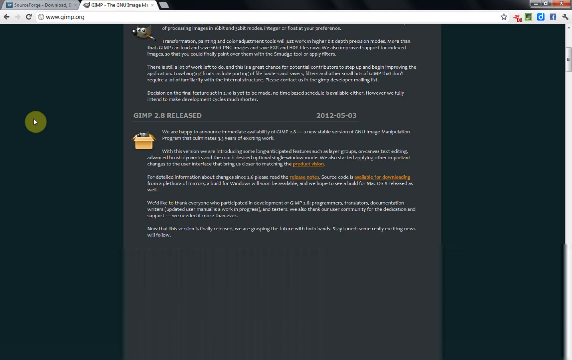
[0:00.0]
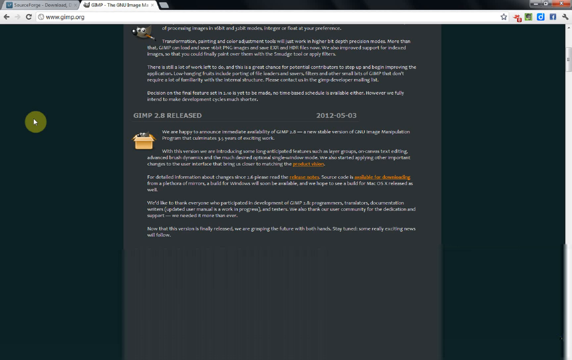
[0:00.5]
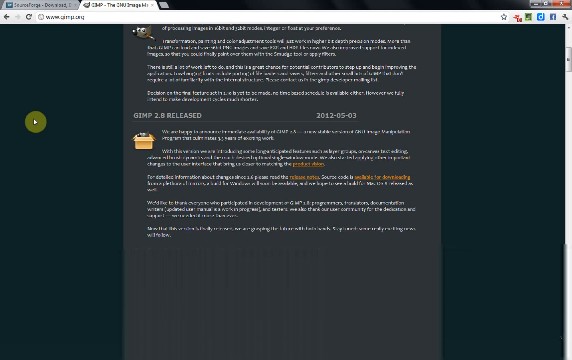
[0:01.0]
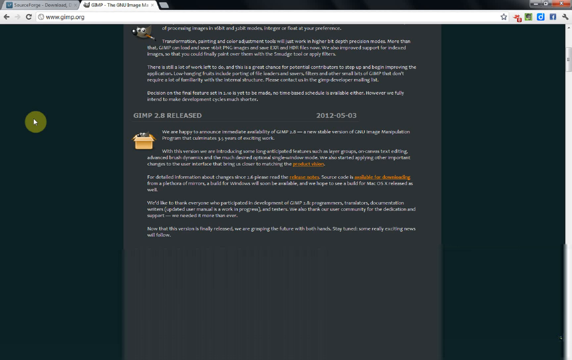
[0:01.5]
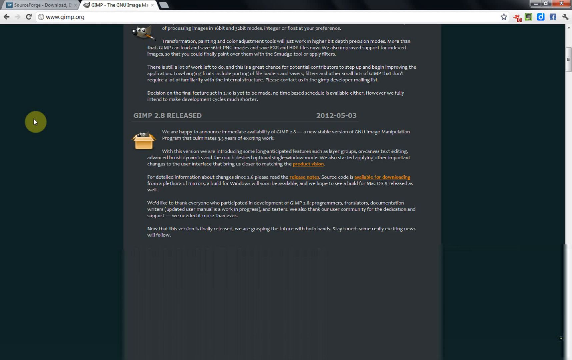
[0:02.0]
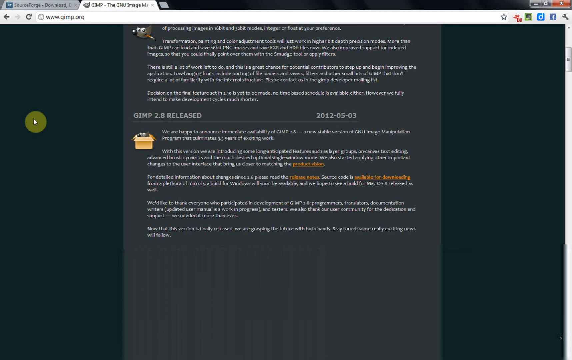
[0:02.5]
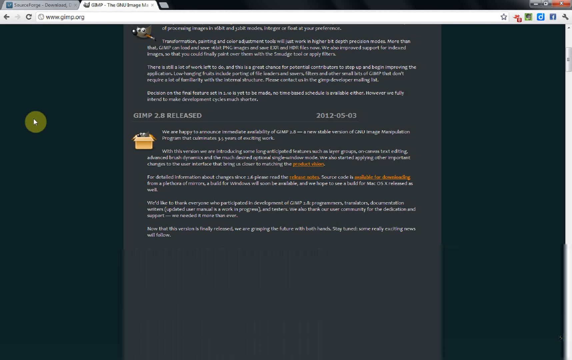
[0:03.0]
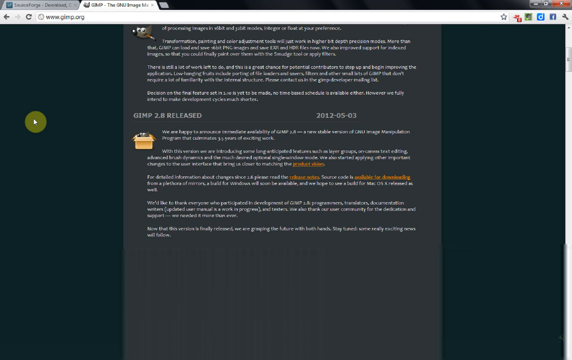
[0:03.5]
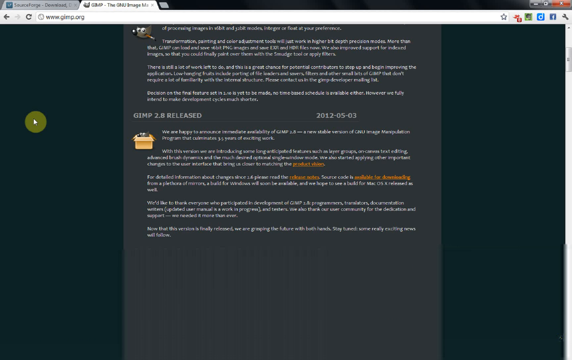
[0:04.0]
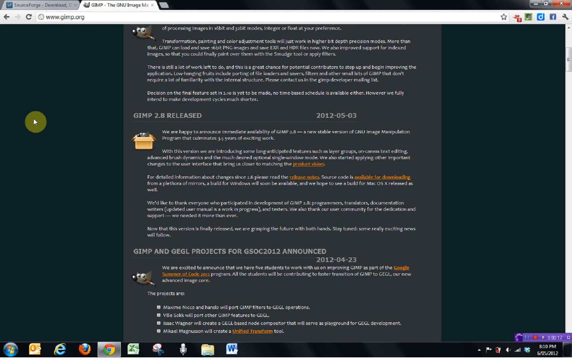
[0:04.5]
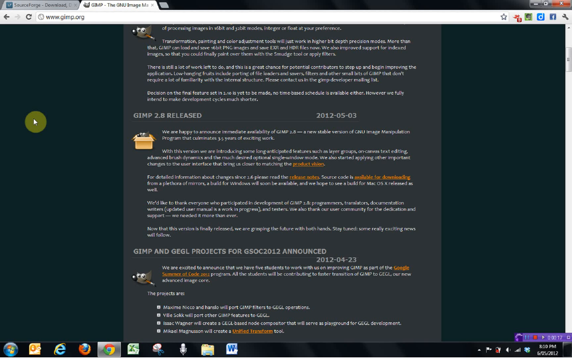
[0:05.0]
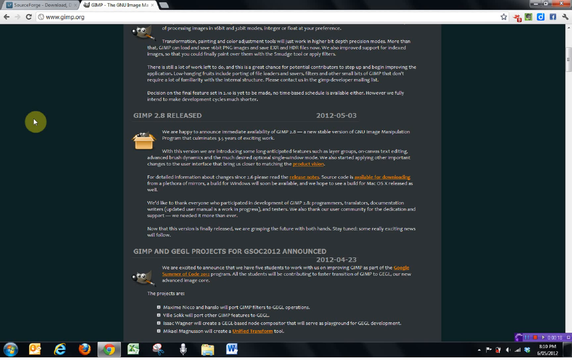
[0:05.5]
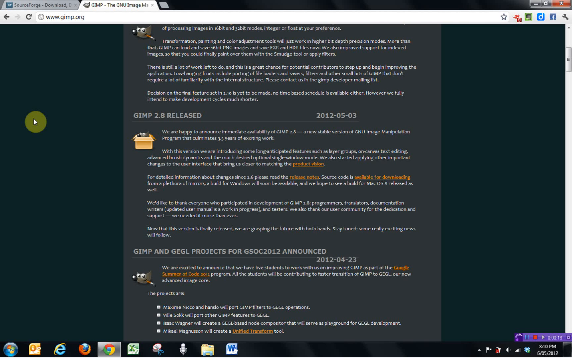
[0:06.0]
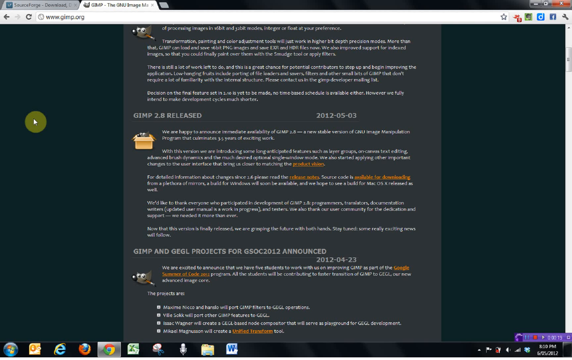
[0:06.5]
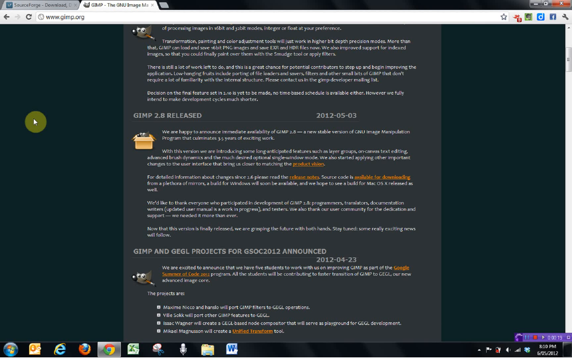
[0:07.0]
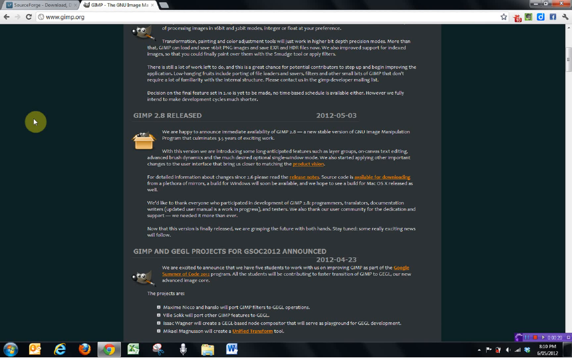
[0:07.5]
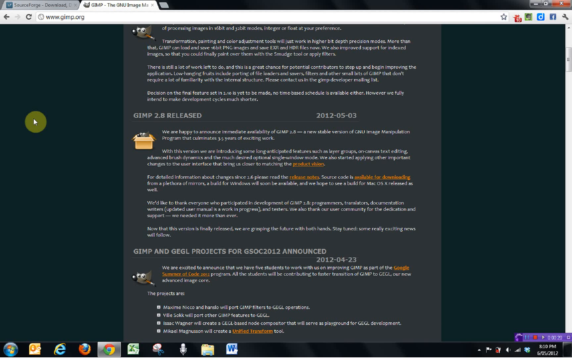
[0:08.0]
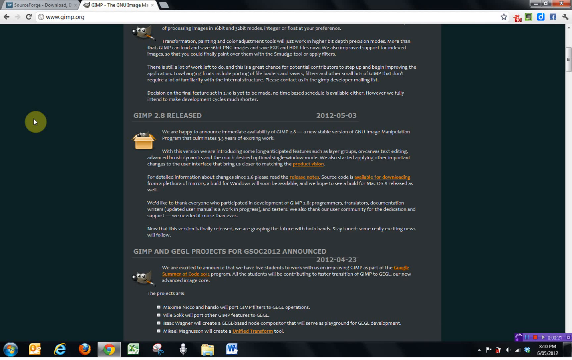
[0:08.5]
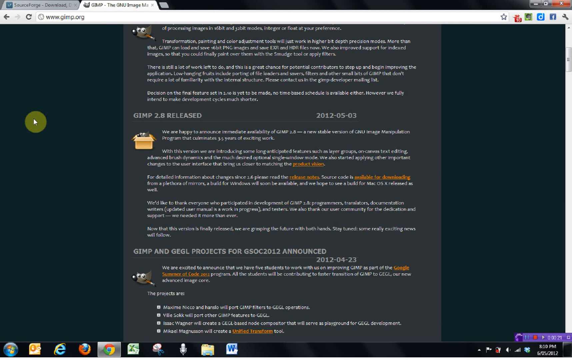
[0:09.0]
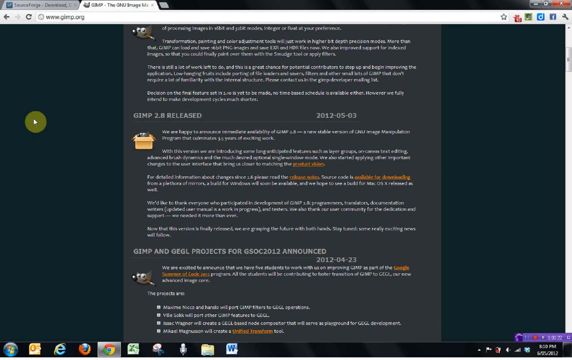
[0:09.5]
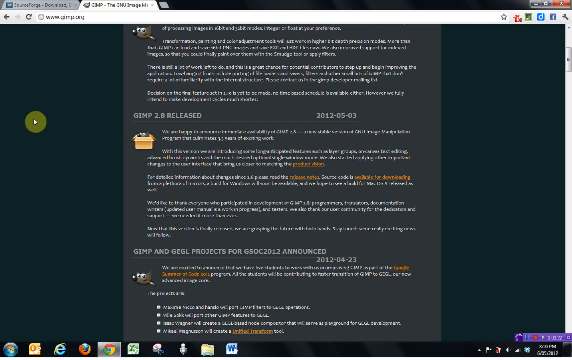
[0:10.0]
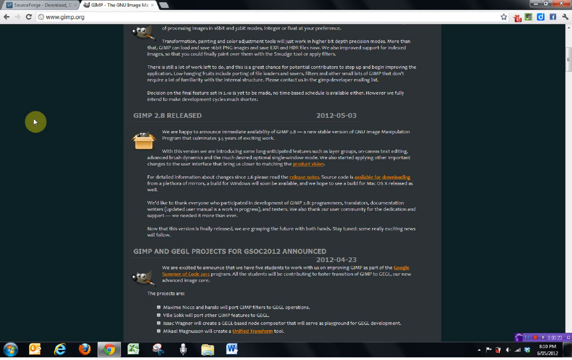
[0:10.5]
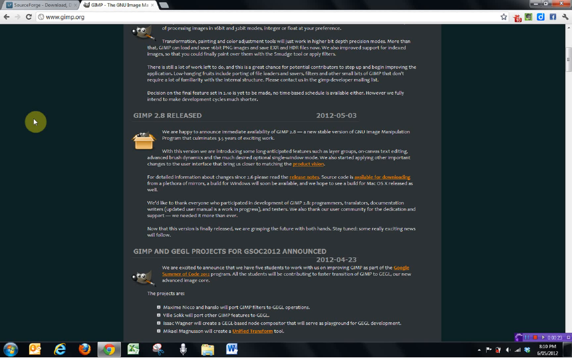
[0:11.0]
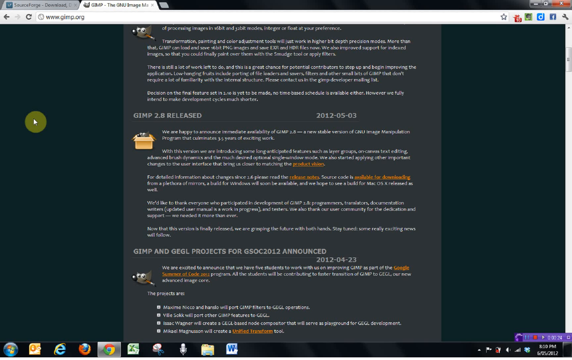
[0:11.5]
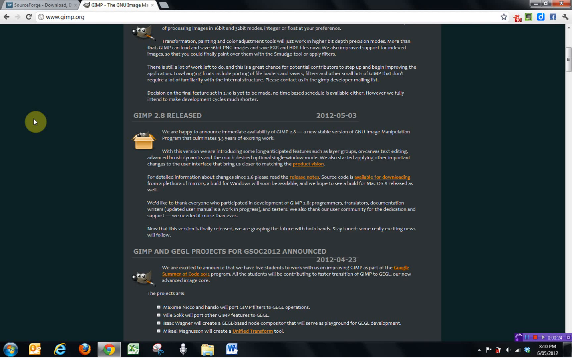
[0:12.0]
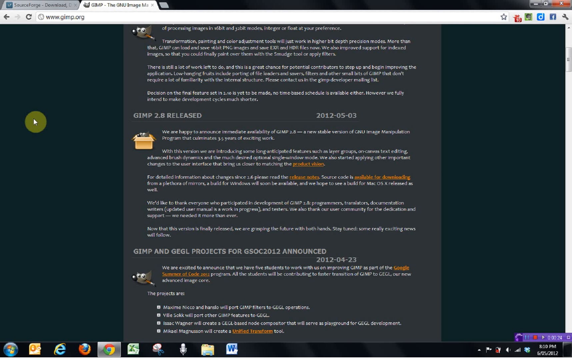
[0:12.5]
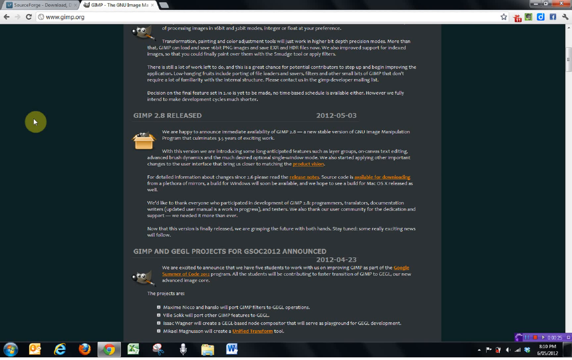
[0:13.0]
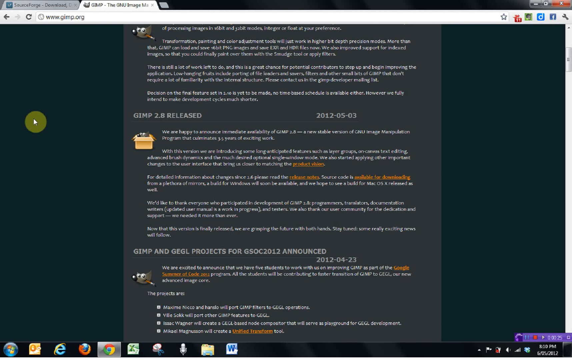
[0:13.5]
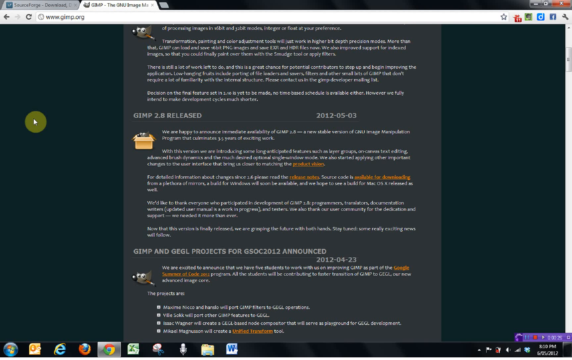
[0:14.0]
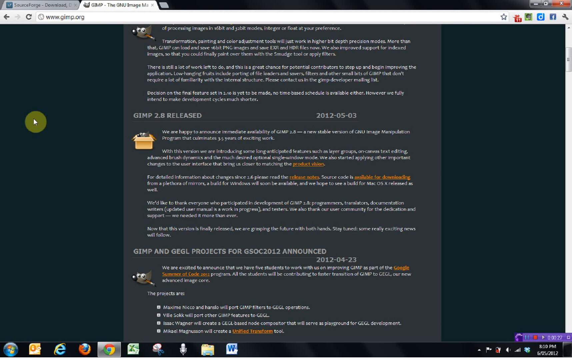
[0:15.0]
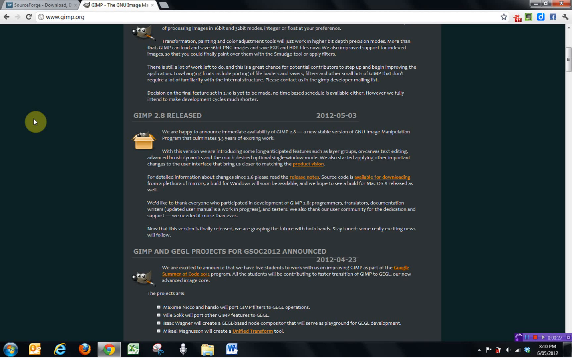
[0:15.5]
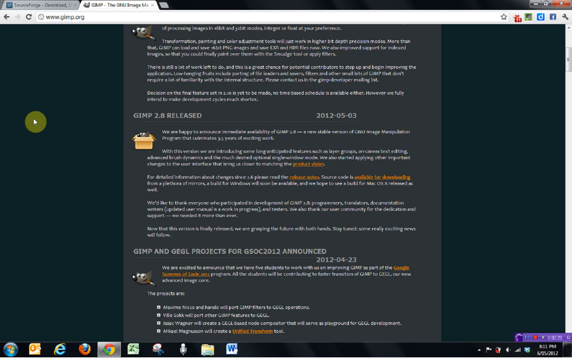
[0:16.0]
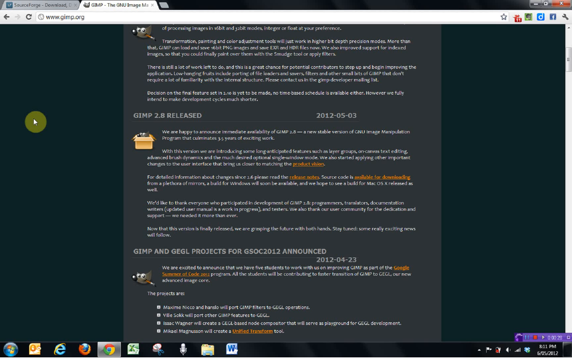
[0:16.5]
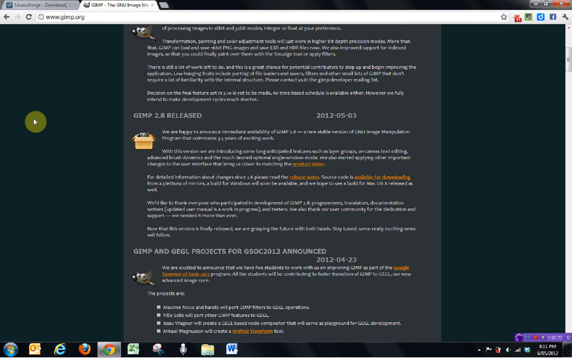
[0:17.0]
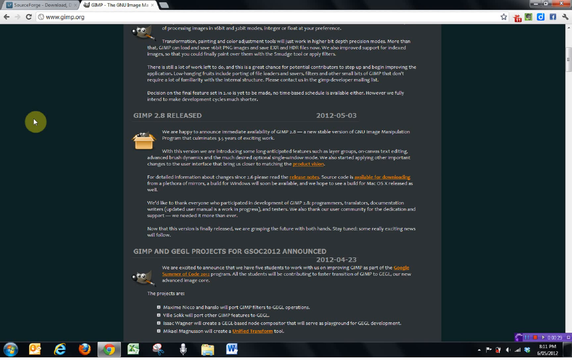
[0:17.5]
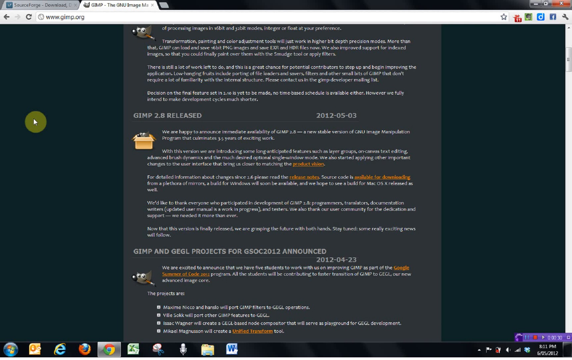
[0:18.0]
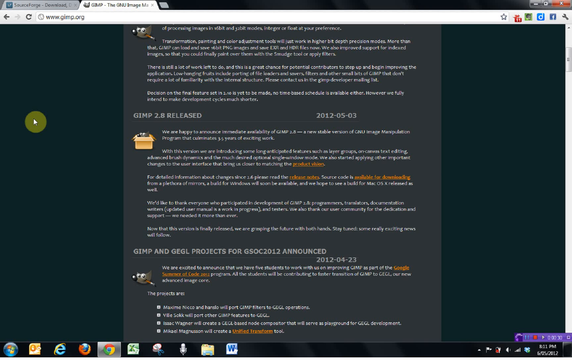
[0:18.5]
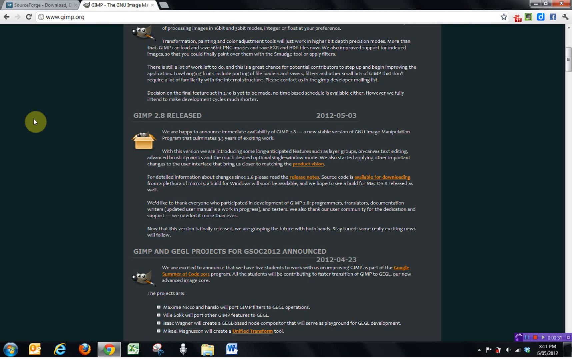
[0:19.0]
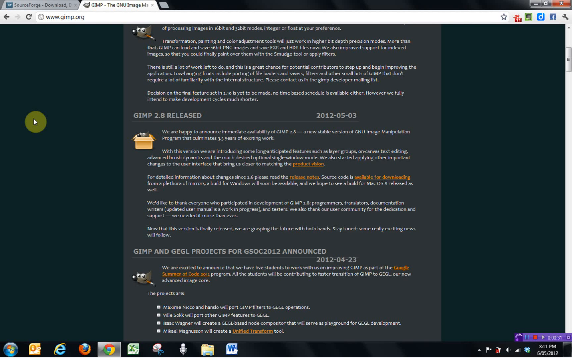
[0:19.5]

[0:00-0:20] The screen is filled with a lot of text, and the largest legible items are headlines and the dates they were announced; the rest is quite blurry. One headline, dated 5.3.2012, says "GIMP 2.8" was released, alongside a small graphic of a box with maybe something coming out of it. Above that is some unreadable text with a small magnifying glass with eyeballs on it. Further down from the middle is the date 4.23.2012 and the text "GIMP and GEGL projects for GSOC 2012 announced".